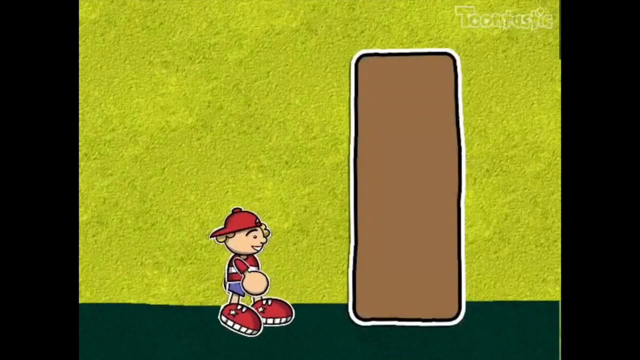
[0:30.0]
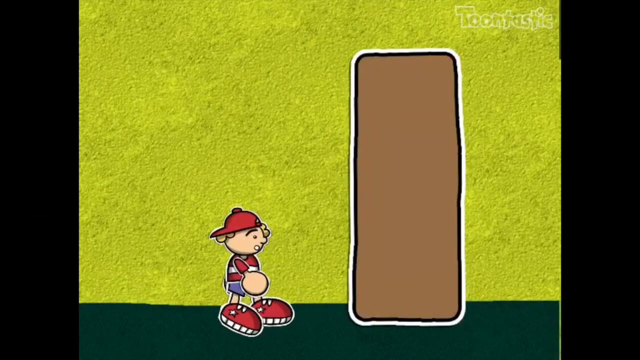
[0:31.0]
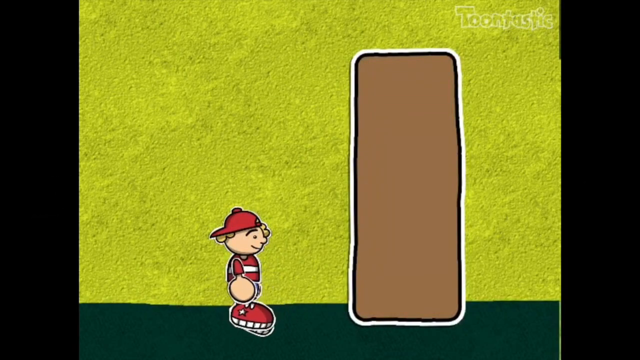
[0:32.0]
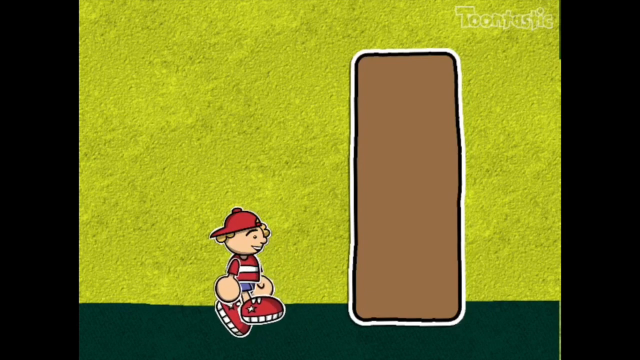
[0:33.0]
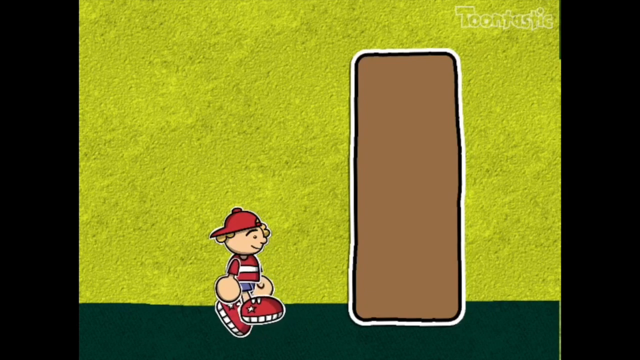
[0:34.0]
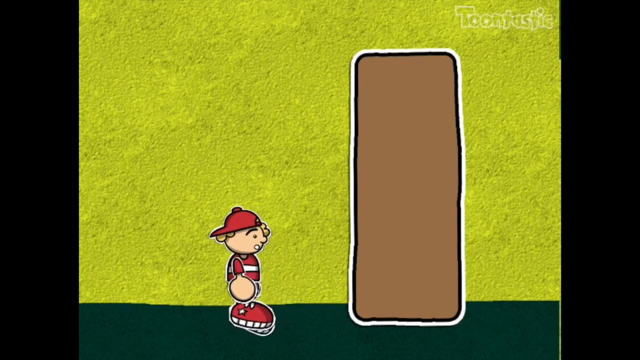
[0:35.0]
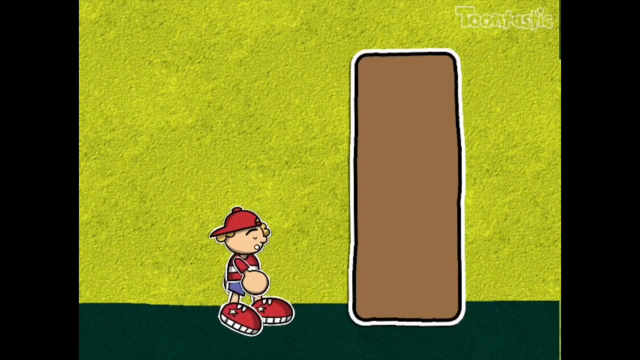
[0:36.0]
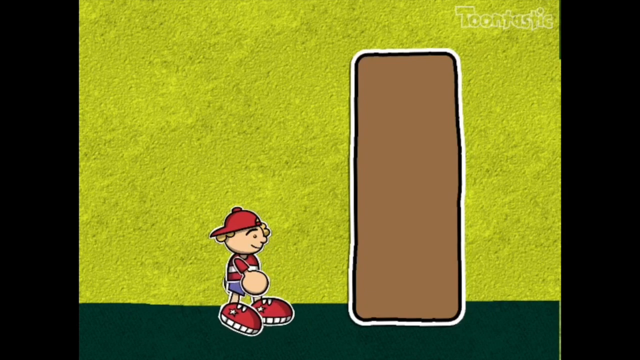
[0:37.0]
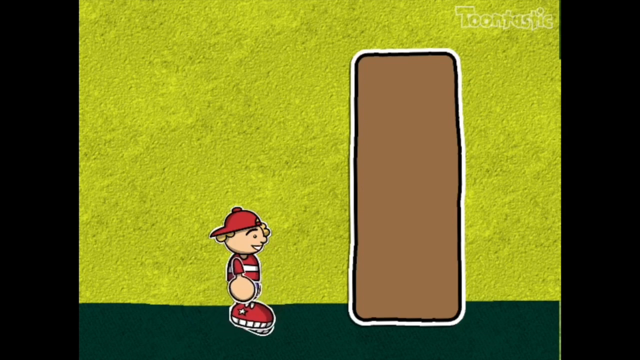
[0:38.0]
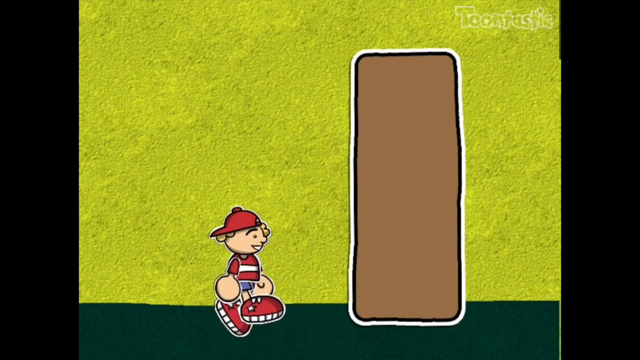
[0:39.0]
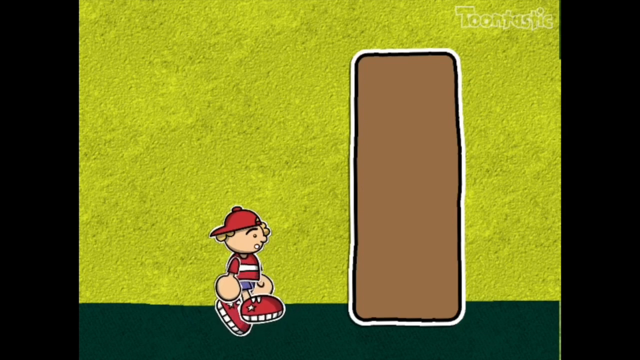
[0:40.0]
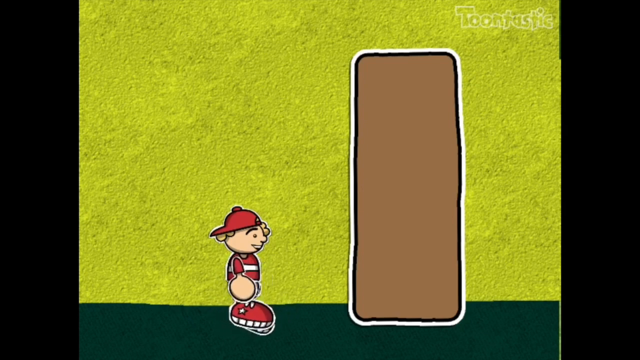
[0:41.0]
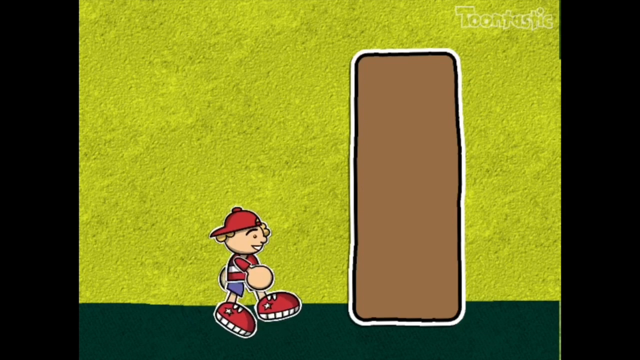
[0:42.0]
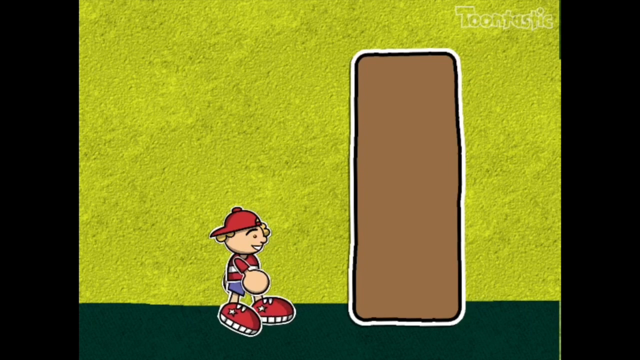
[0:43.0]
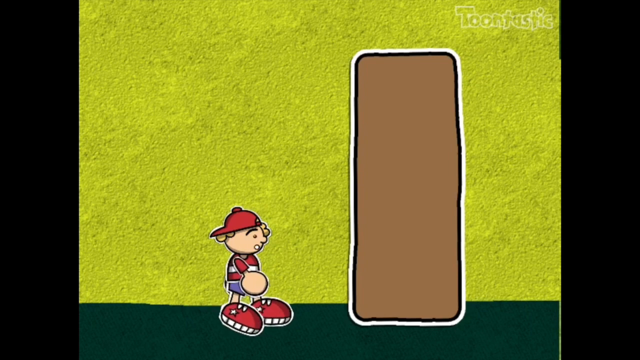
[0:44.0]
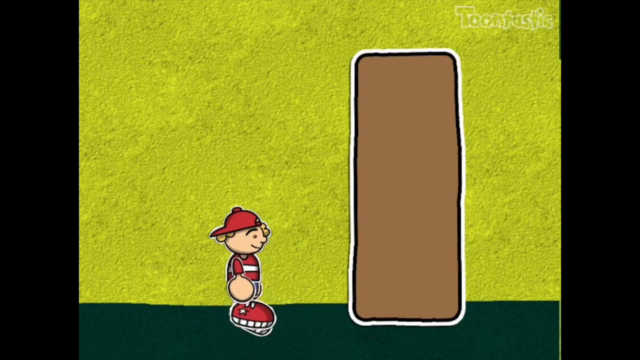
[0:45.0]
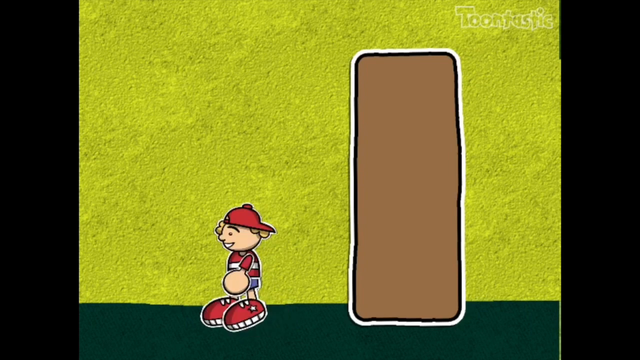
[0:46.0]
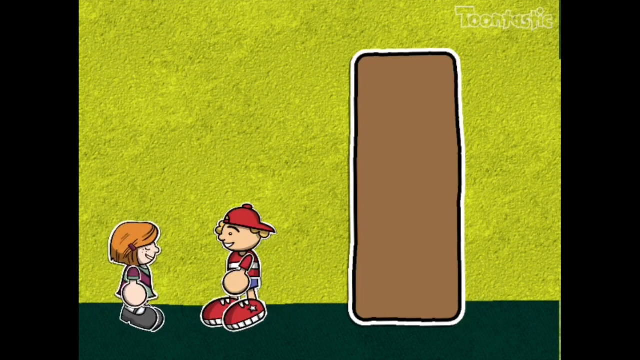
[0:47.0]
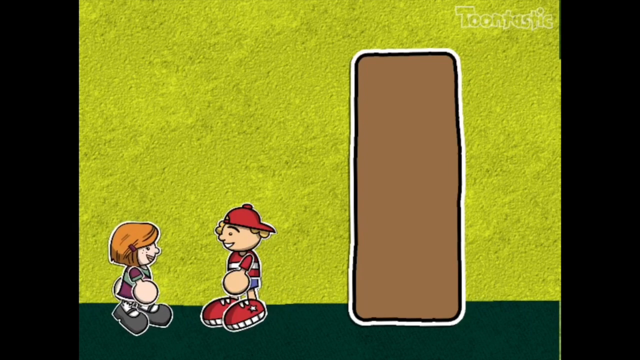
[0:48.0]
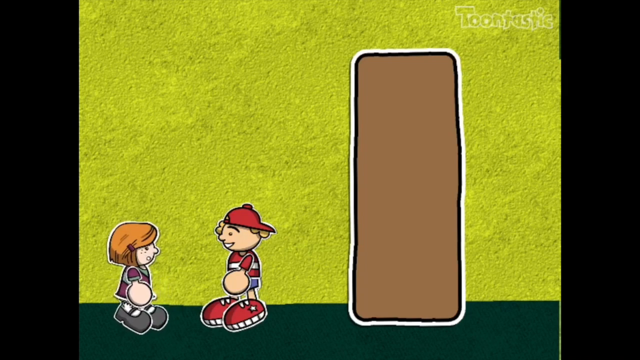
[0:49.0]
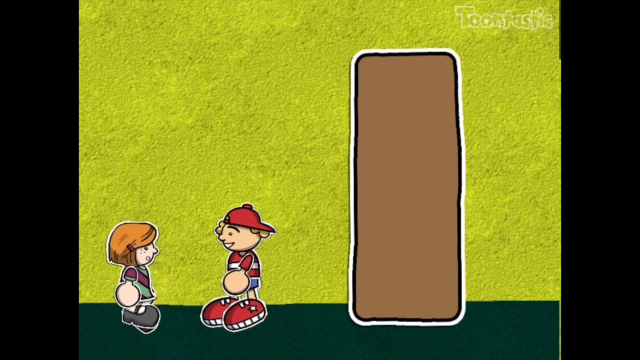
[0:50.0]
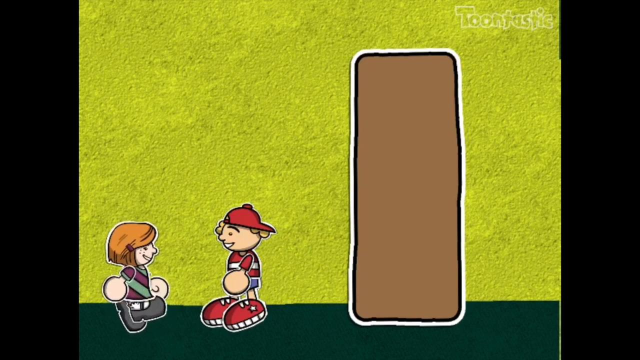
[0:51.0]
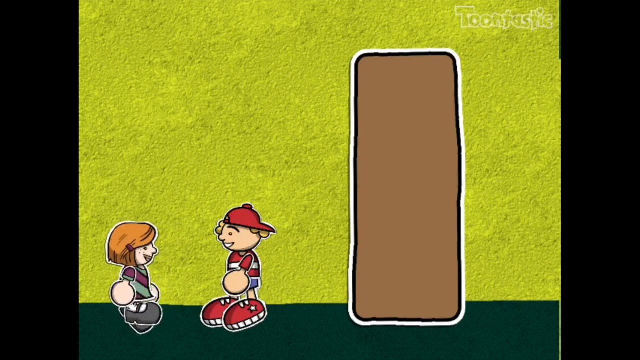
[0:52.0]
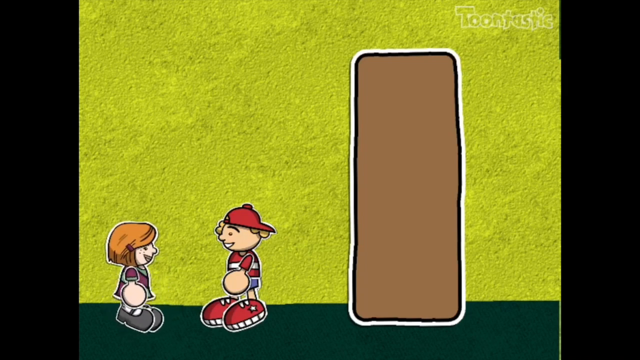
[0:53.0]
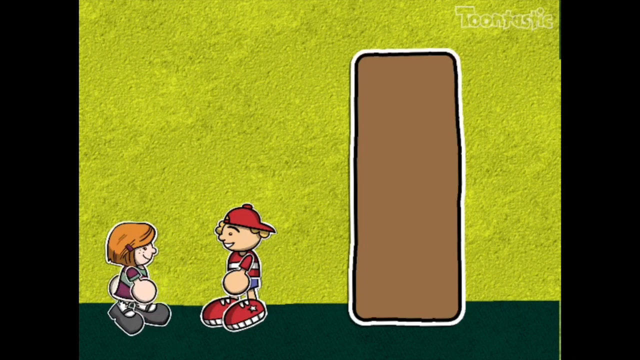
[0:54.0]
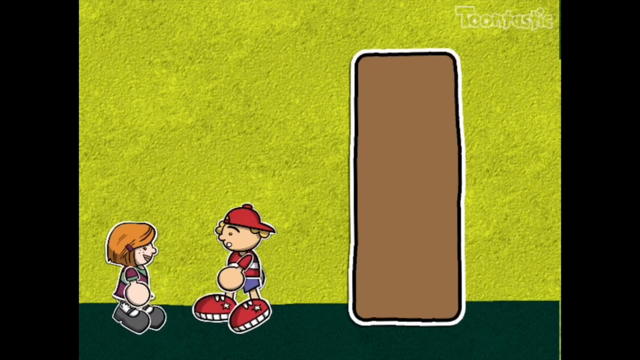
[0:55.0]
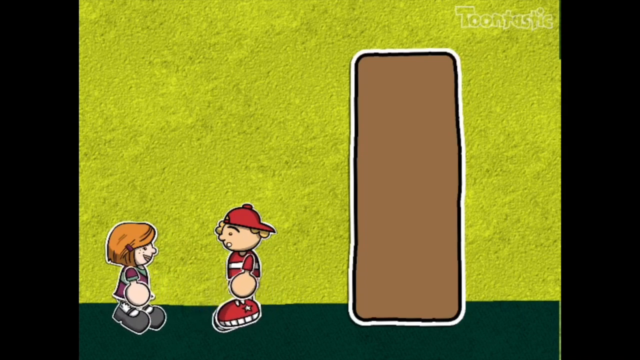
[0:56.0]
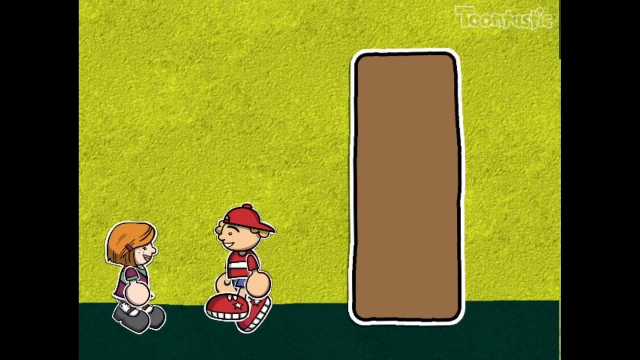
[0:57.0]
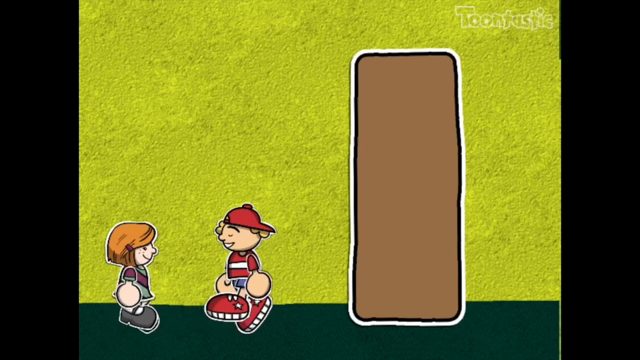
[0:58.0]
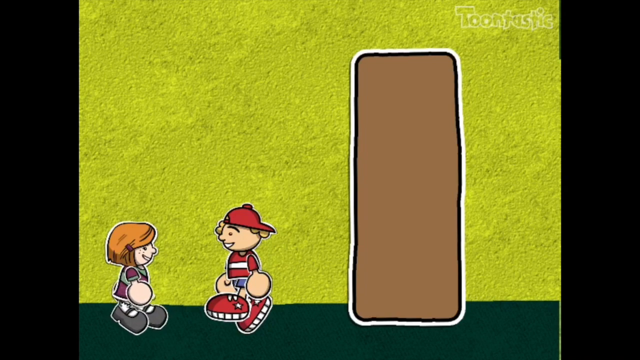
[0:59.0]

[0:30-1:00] The animated boy tries to walk through a brown, rectangular door against a yellow background. He wears a red baseball cap, red Converse shoes, a red and white striped top and blue shorts. A girl joins him; she wears a short gown and has shoulder-length hair. The two converse with each other, and both their legs are moving.